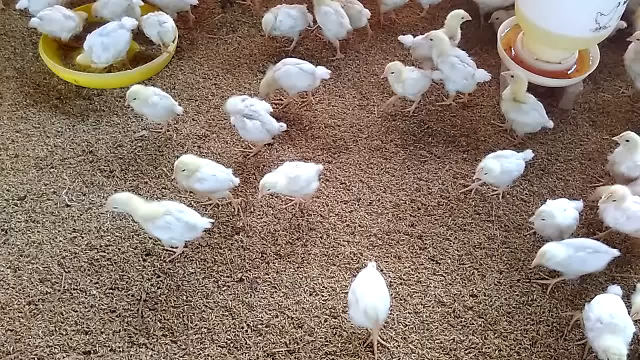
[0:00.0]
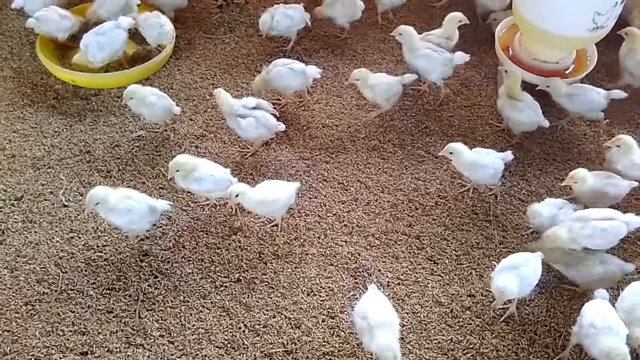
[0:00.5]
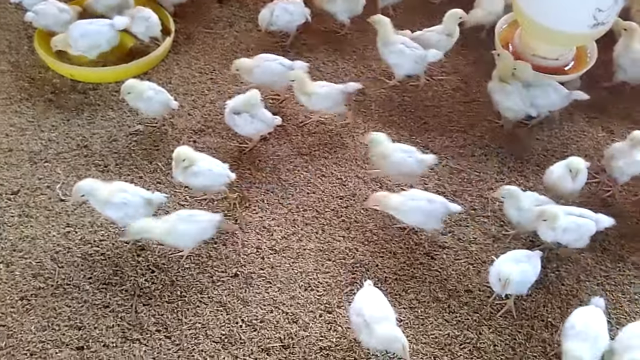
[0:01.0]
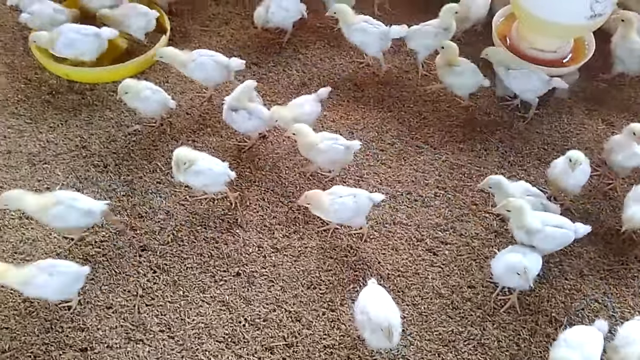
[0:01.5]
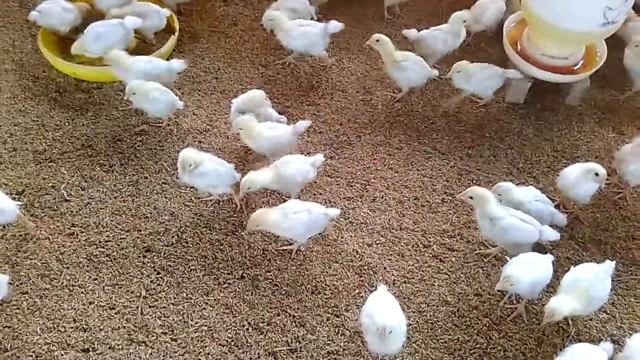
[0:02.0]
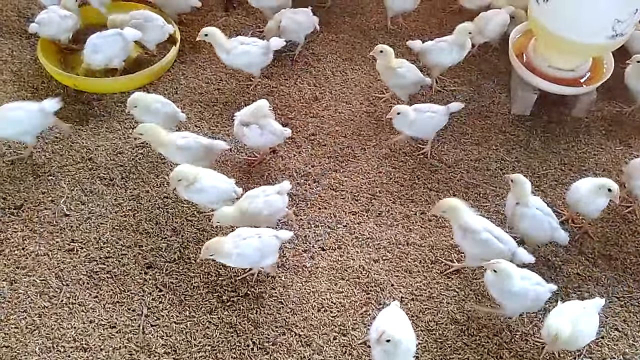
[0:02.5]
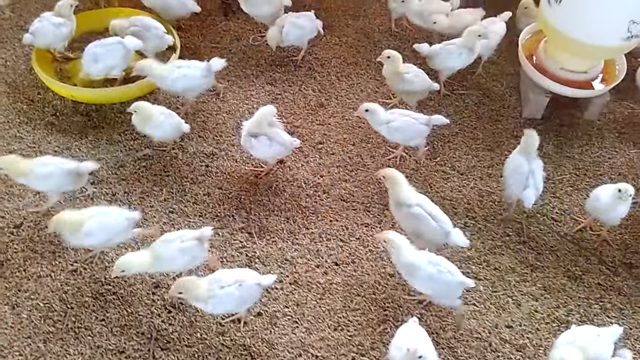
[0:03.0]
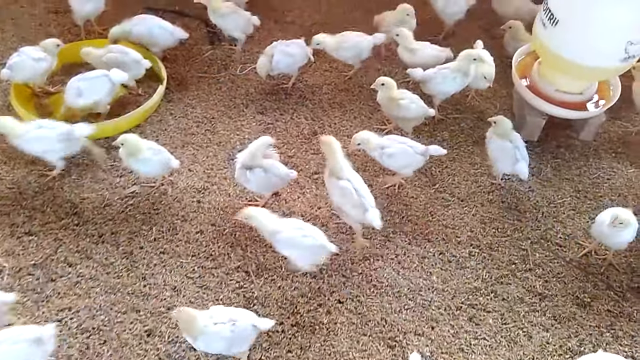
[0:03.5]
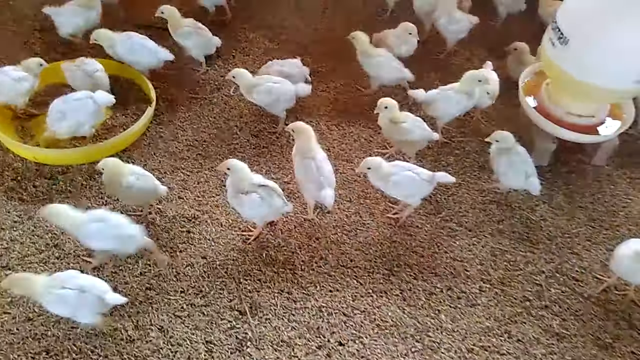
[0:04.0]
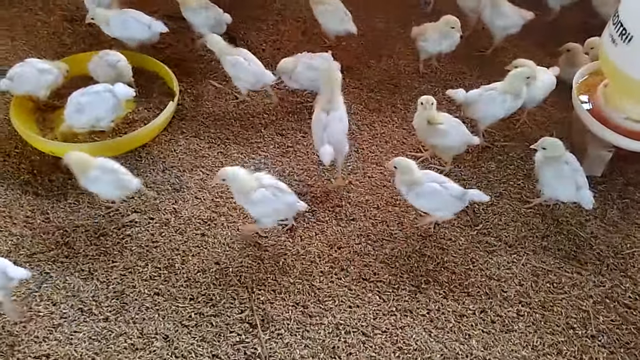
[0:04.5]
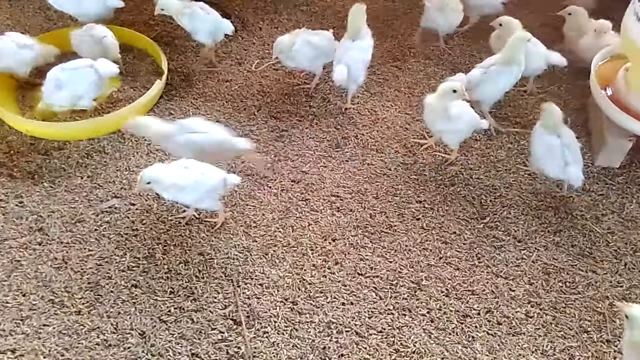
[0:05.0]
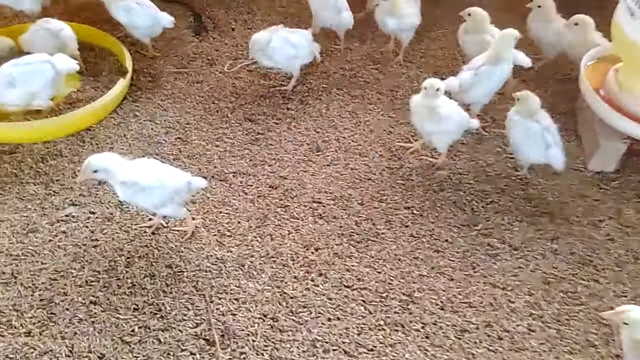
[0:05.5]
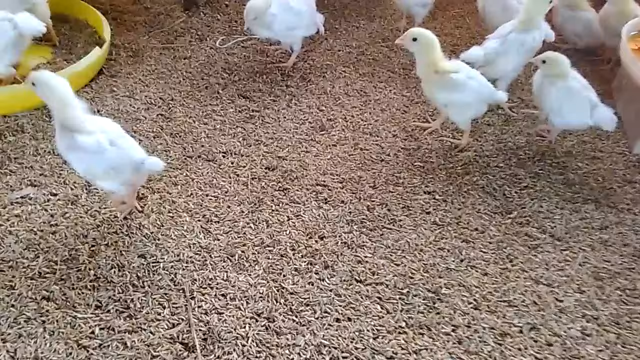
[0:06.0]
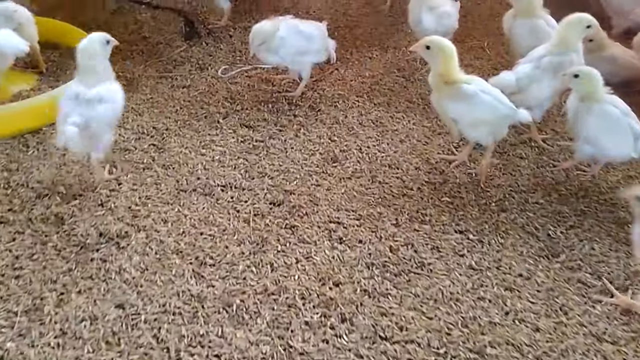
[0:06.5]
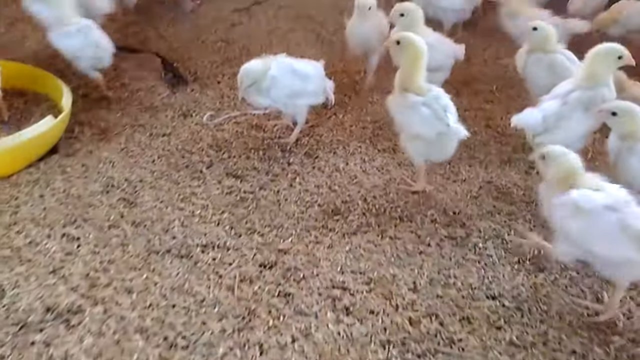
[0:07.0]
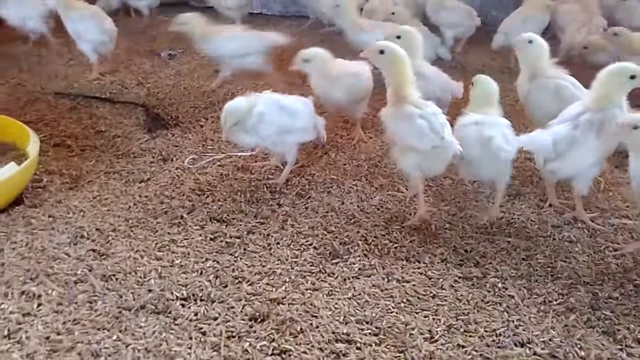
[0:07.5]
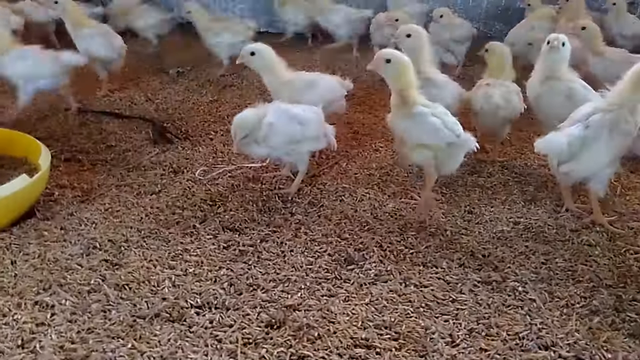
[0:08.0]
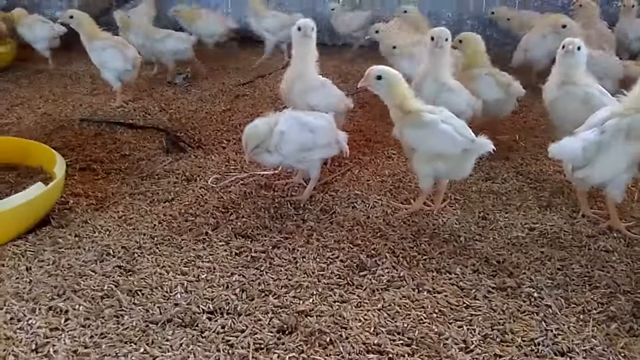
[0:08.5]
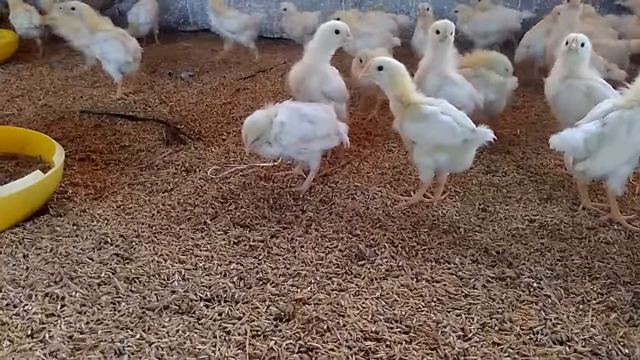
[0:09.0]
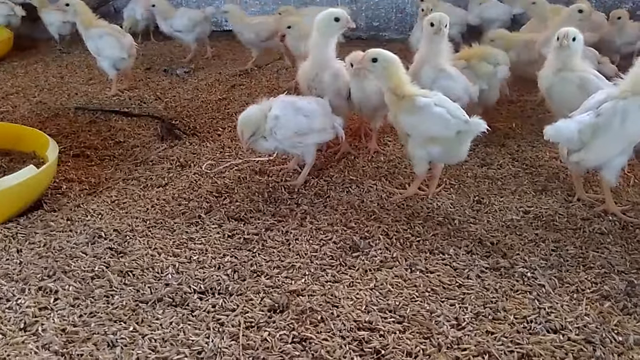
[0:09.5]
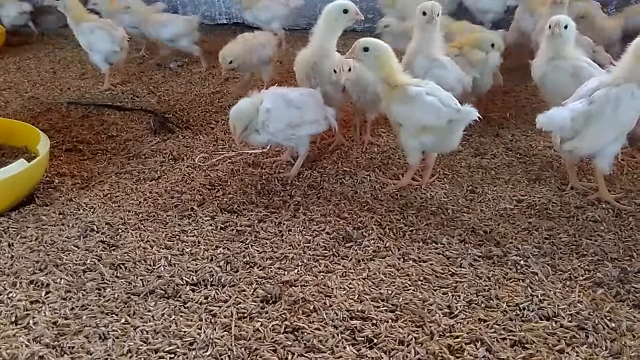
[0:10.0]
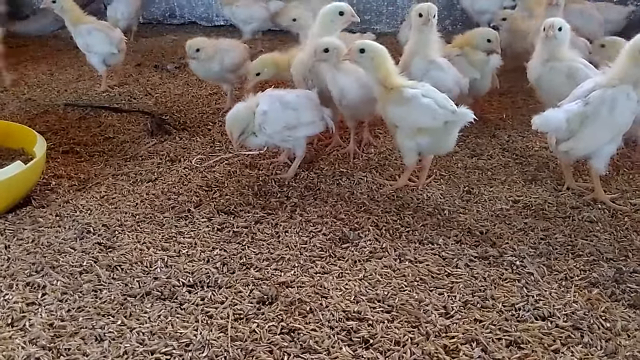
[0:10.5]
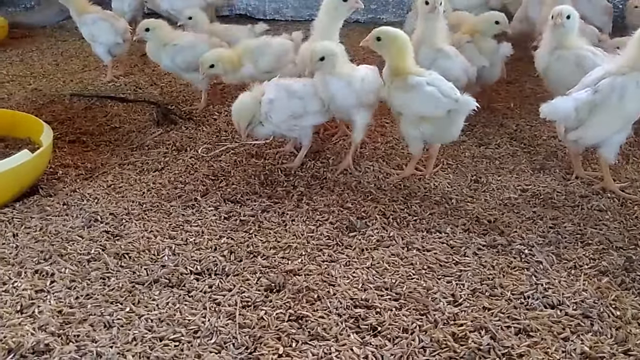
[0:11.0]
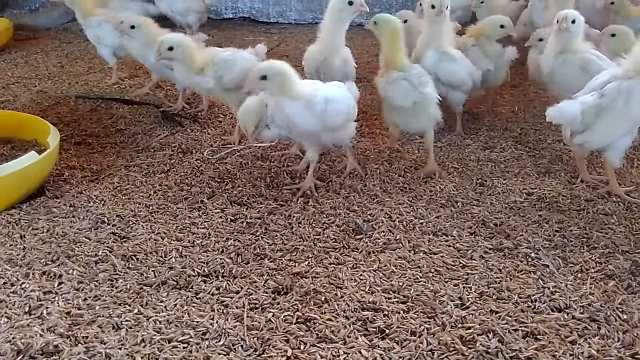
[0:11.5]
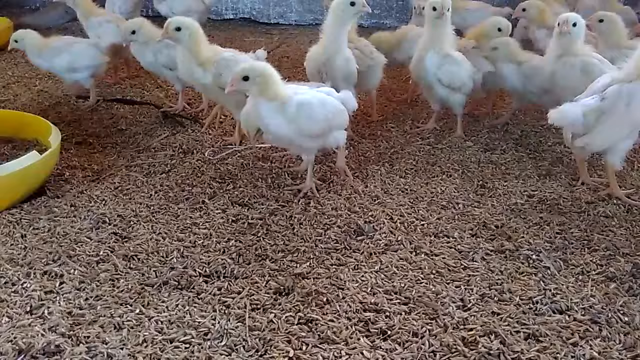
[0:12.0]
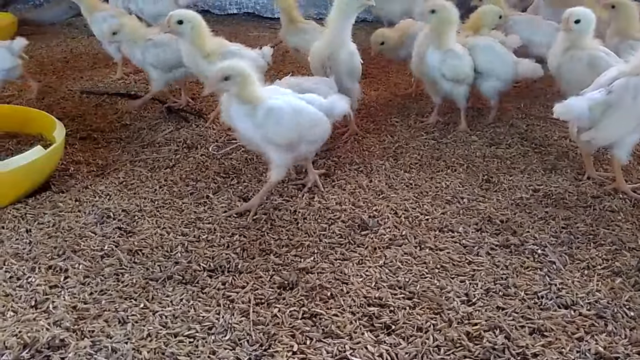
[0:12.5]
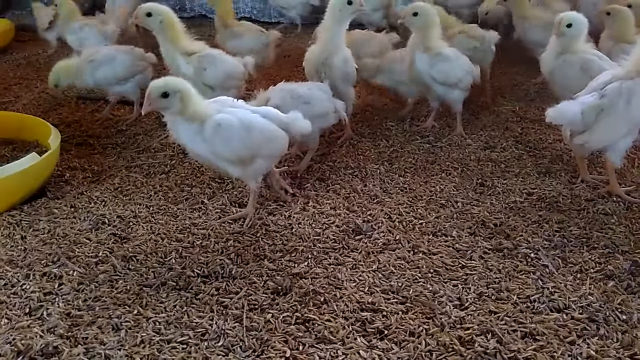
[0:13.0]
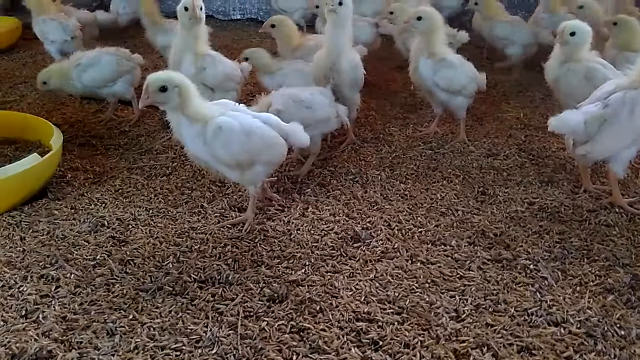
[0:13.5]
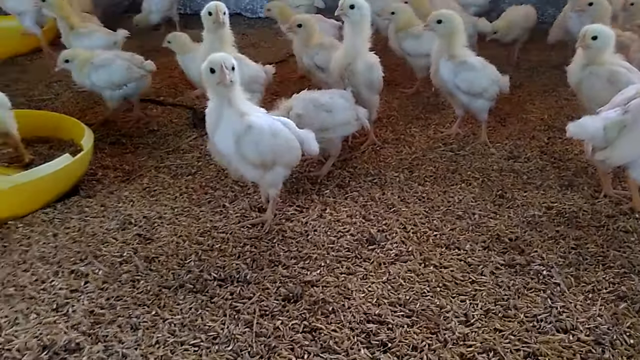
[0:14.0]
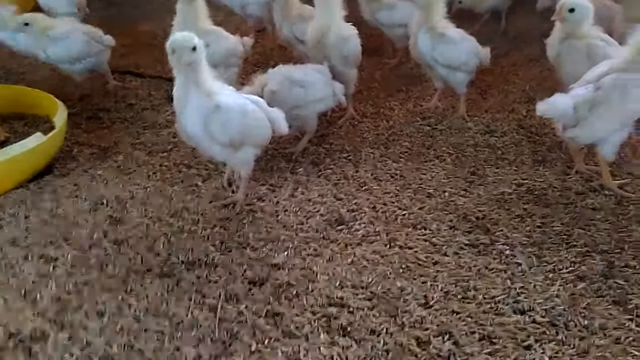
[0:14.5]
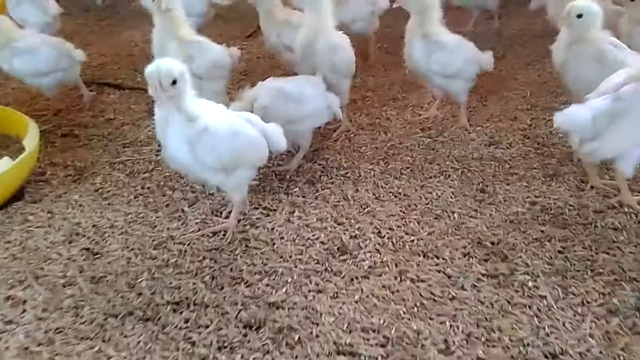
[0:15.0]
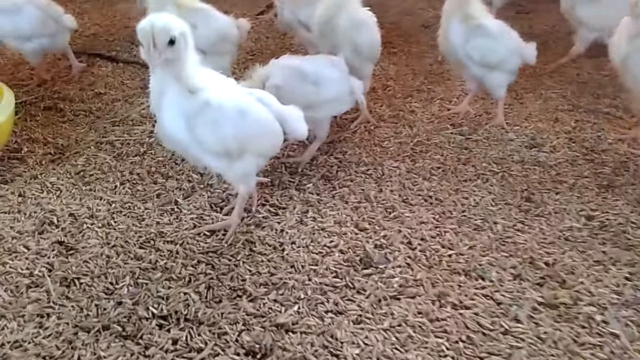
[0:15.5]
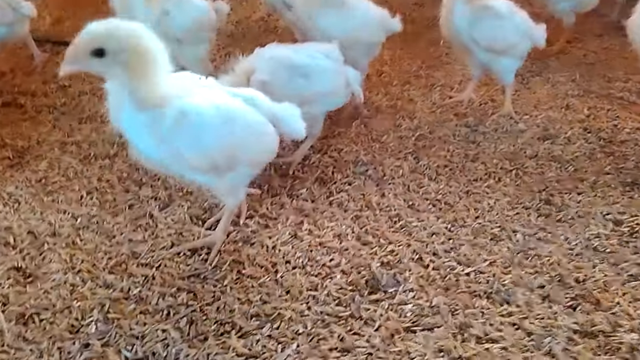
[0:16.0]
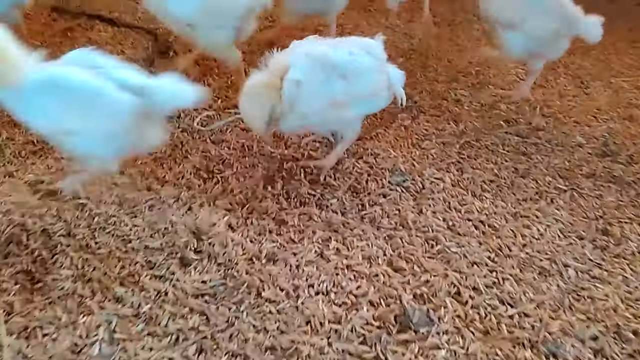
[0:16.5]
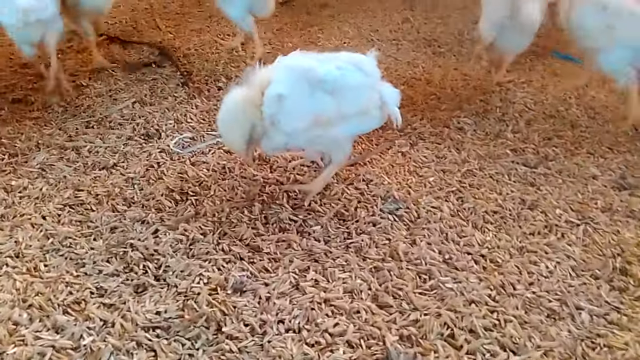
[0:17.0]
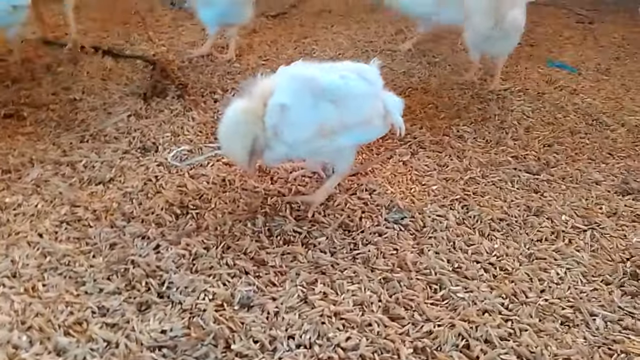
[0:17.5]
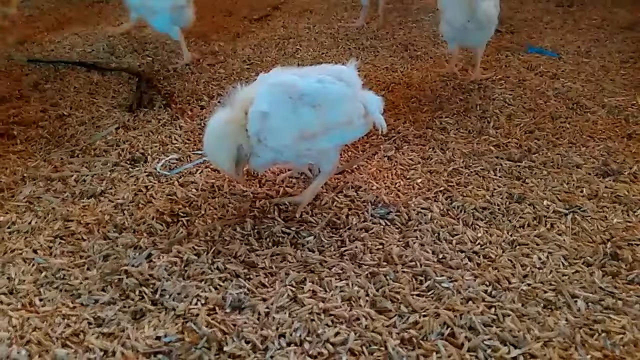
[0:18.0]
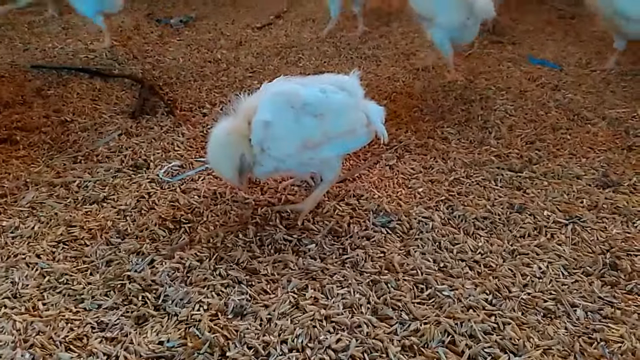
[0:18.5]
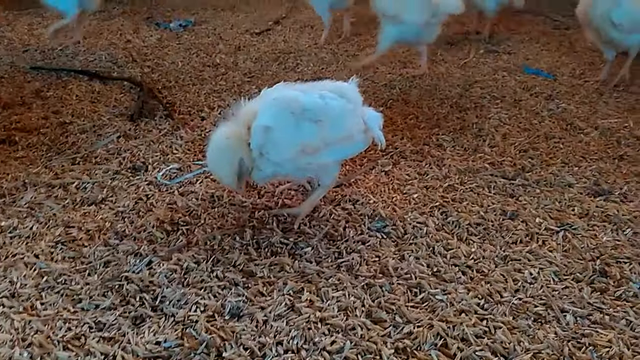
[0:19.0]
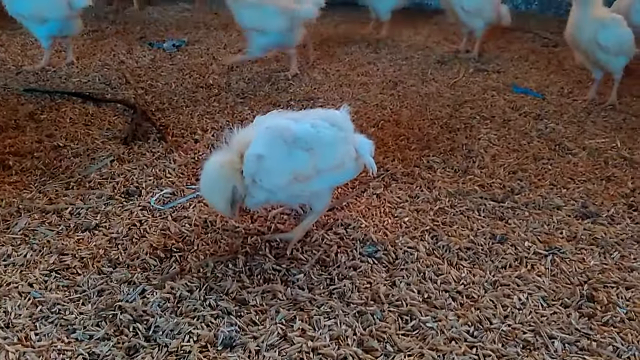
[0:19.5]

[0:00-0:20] About 20 small baby chickens are in a feeding and watering area. On the left is a yellow dish holding some sort of birdseed-type food, and on the right is a watering container with an upside-down container on top of it, which refills the water as the birds drink. The chicks run back and forth, and a lot of them run to the left. One starts running and chicks in the background follow it, so a big herd of them walks to the left; the number walking makes it clear there are many more chickens off camera. The camera operator zooms in on a single chick that is sitting and staring at the ground.